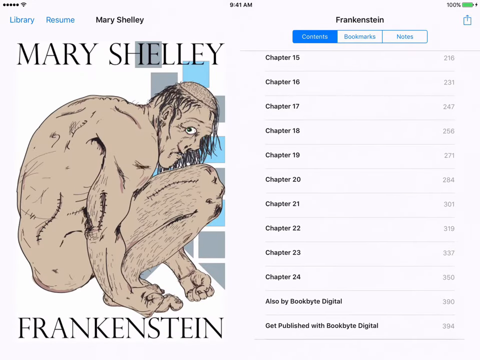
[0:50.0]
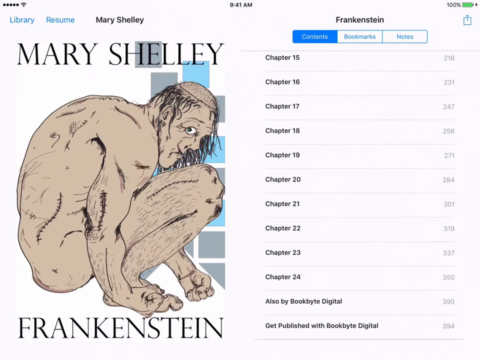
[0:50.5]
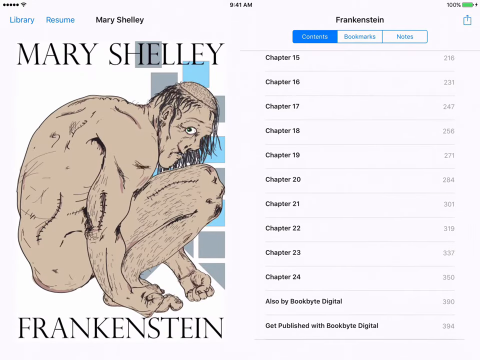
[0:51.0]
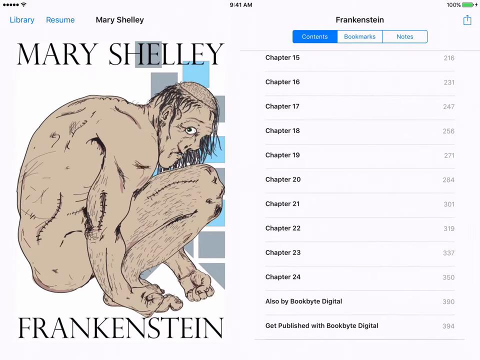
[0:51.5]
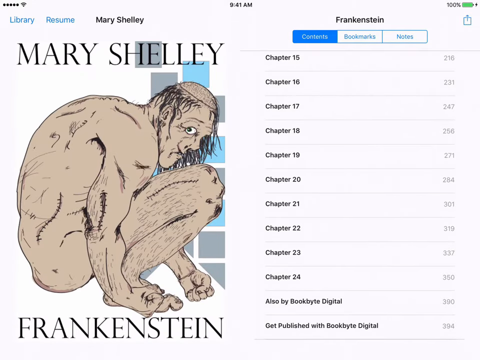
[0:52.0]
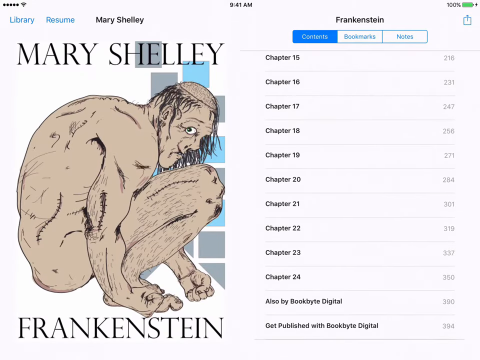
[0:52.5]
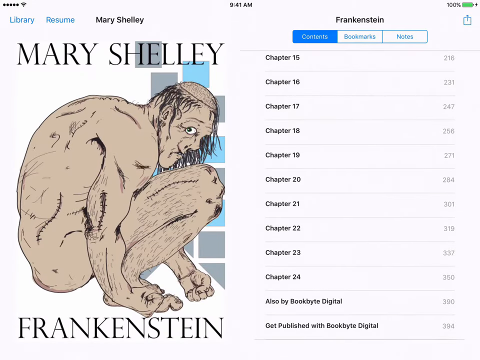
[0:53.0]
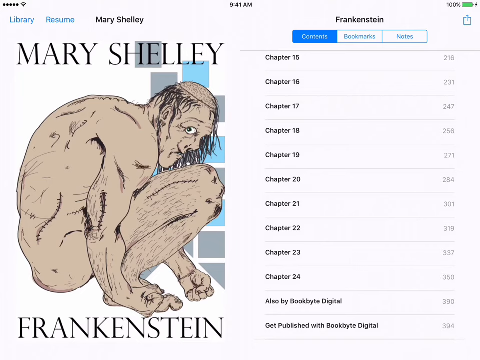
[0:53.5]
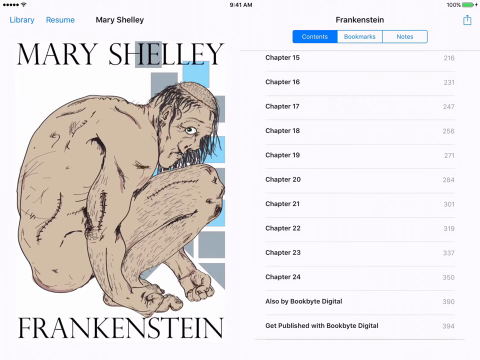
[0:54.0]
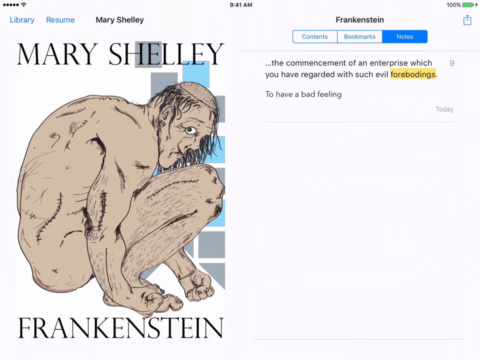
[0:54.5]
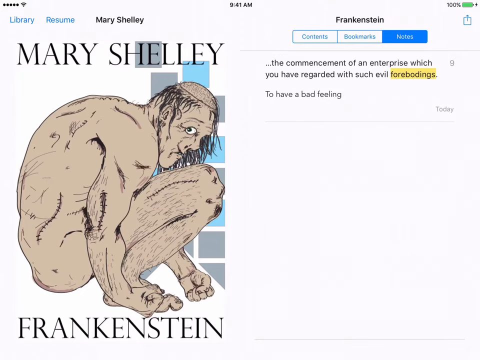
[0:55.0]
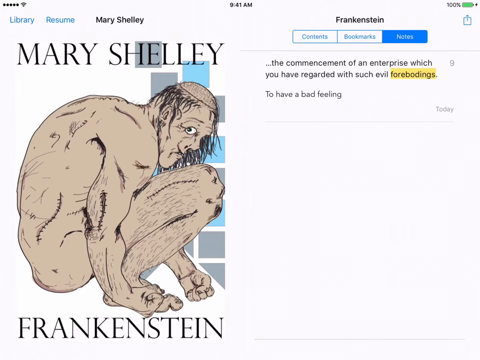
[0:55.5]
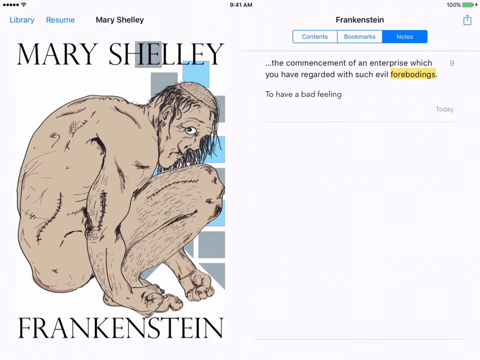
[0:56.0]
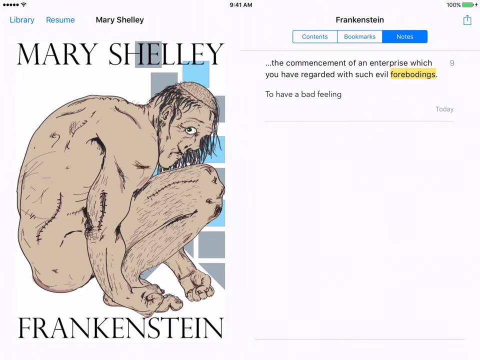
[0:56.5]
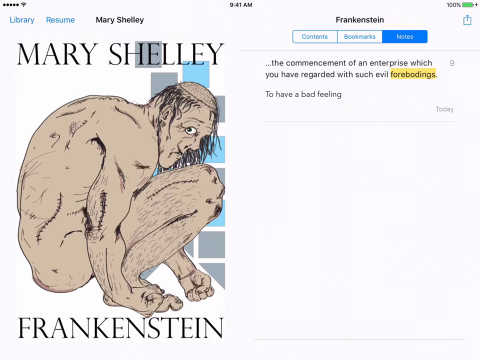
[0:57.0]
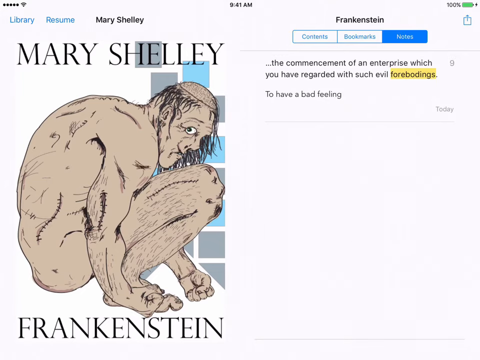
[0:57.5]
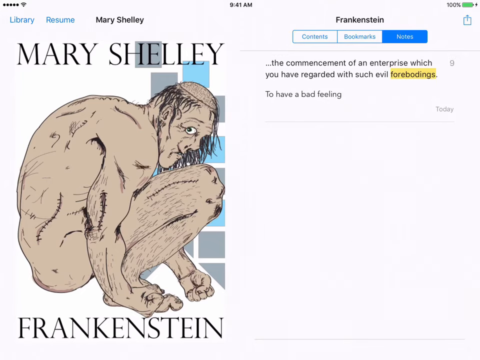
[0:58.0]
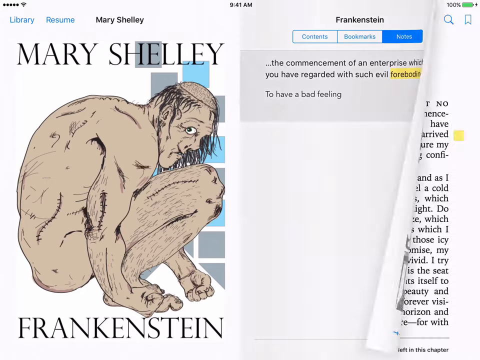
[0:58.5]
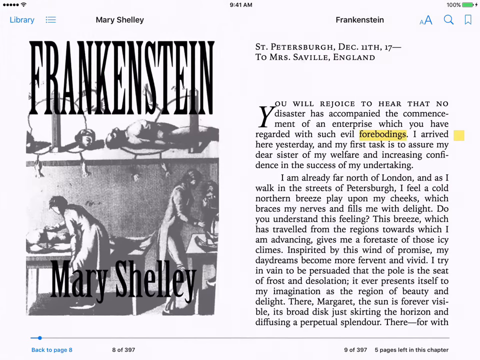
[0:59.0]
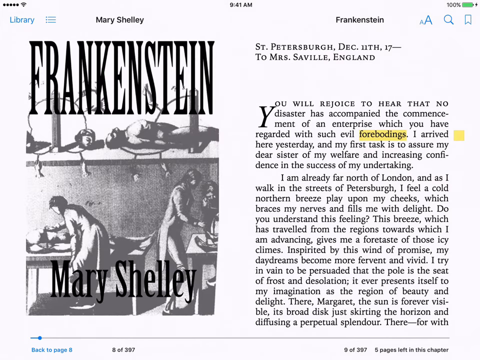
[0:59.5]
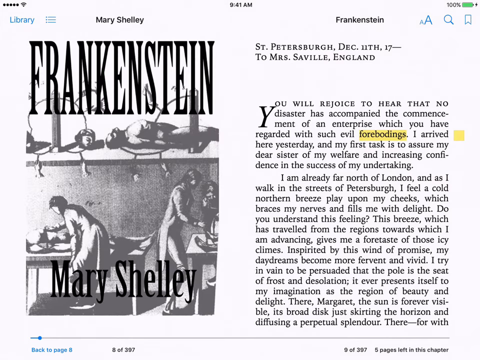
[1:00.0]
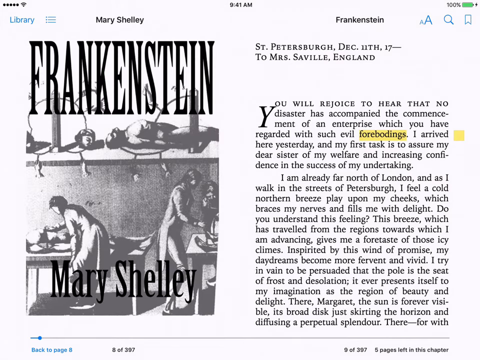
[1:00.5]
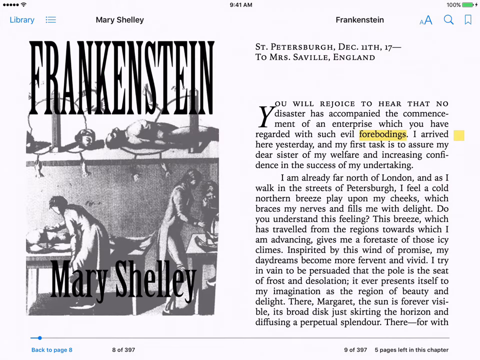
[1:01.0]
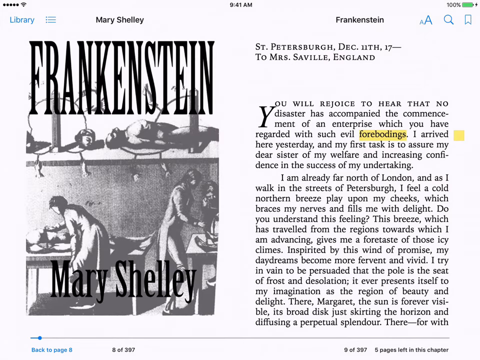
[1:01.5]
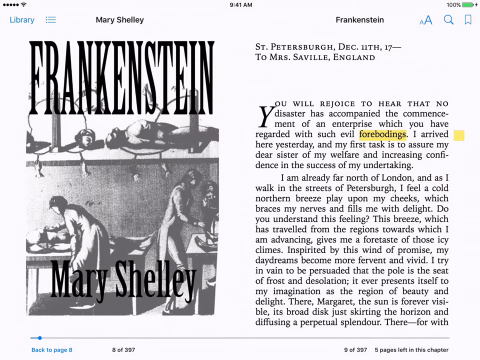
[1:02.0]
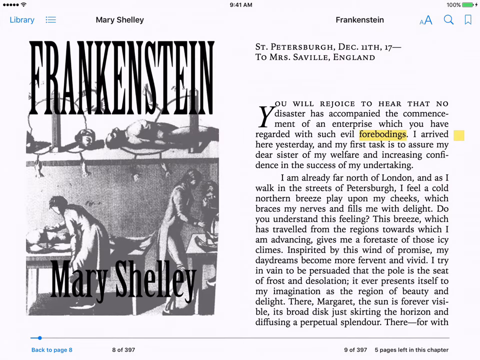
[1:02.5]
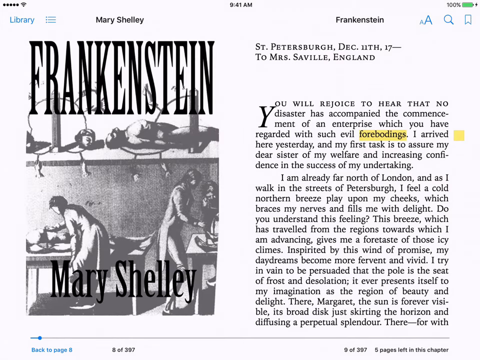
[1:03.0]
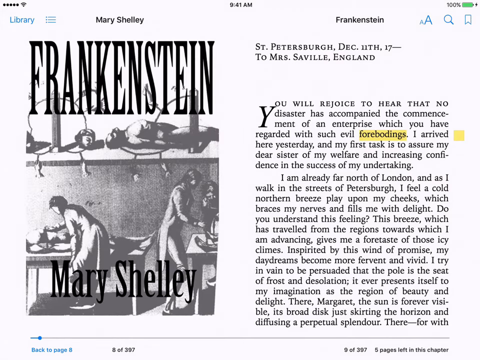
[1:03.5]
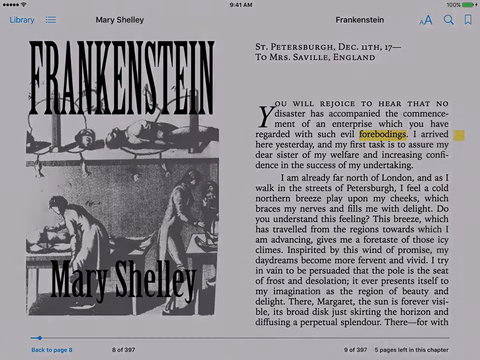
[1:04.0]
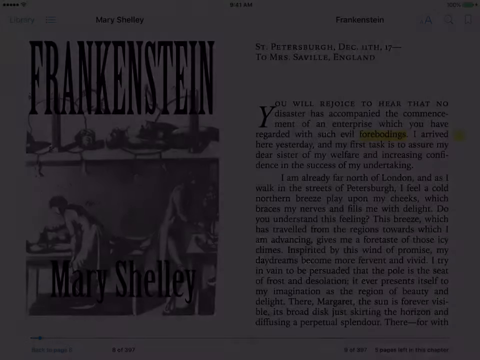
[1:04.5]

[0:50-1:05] The title "Mary Shelley" is at the top with a skeleton monster below it. The table of contents for Frankenstein is visible on the side, listing 15 chapters through 24. The ebook appears to be open on a device, with navigation options like Library, Resume, and tabs for Contents, Bookmarks and Notes. Sentences of the novel are shown, and the meaning of the highlighted word is shown at the bottom. The page is flipped and it goes back to the novel, which has the title Frankenstein and is written by Mary Shelley. There is a highlighted word in the novel.